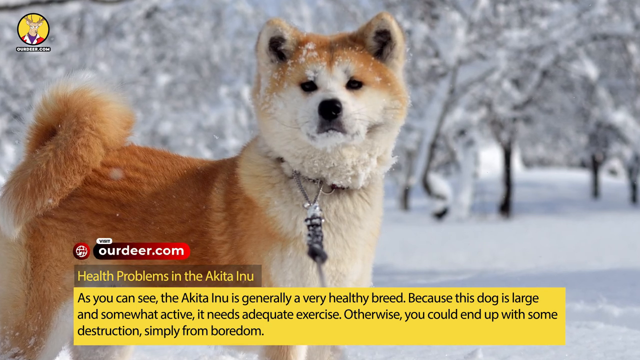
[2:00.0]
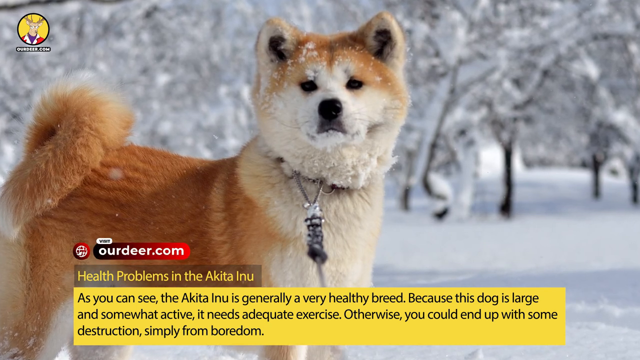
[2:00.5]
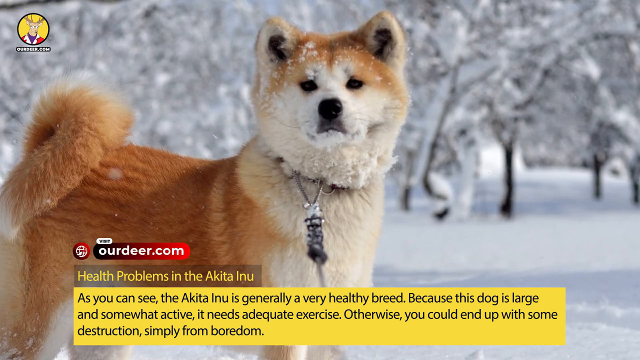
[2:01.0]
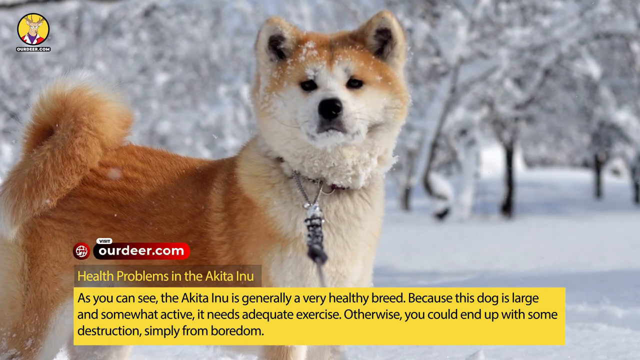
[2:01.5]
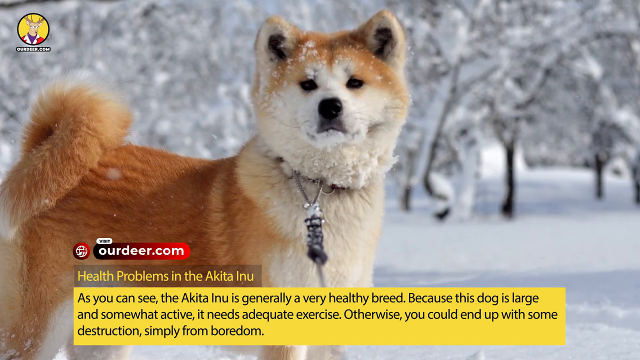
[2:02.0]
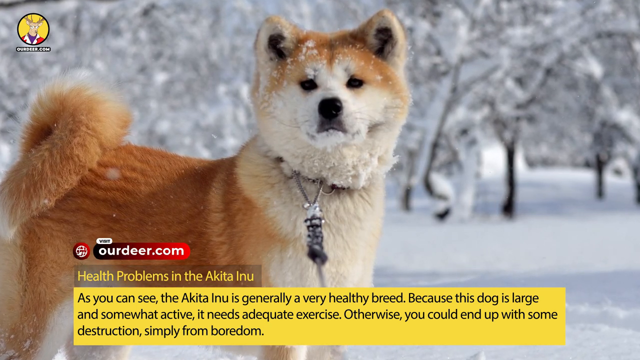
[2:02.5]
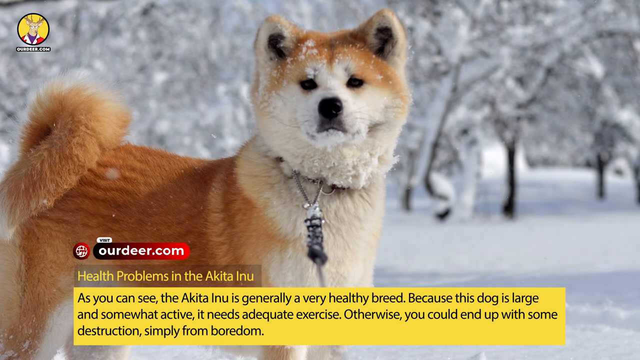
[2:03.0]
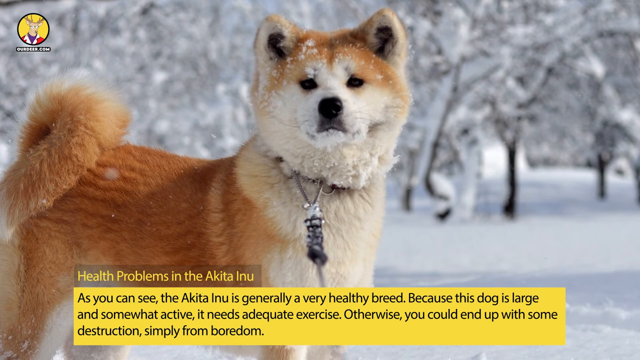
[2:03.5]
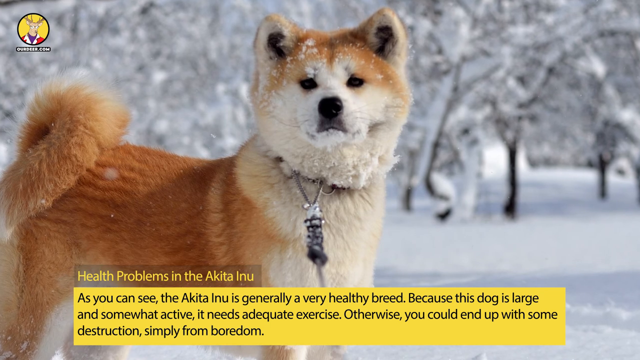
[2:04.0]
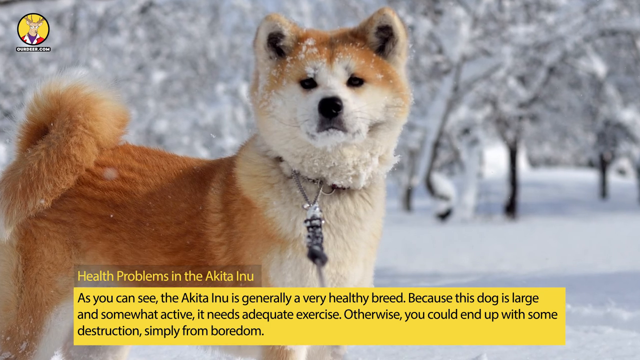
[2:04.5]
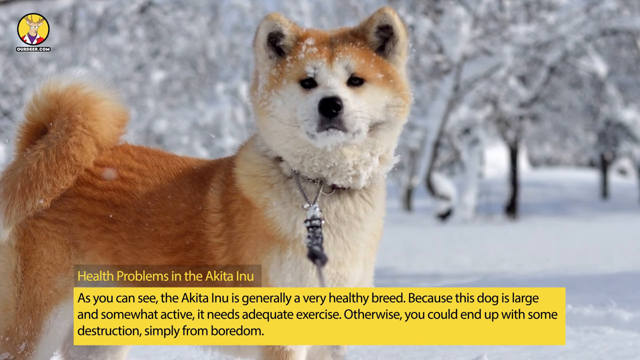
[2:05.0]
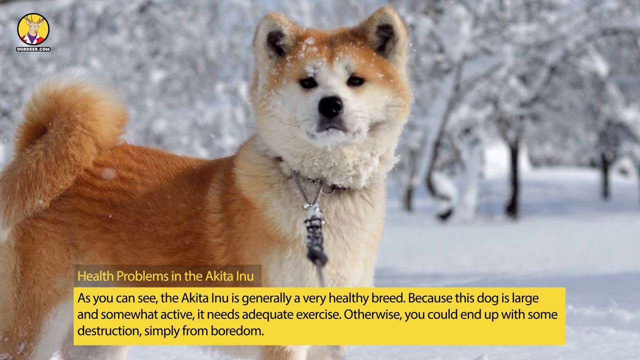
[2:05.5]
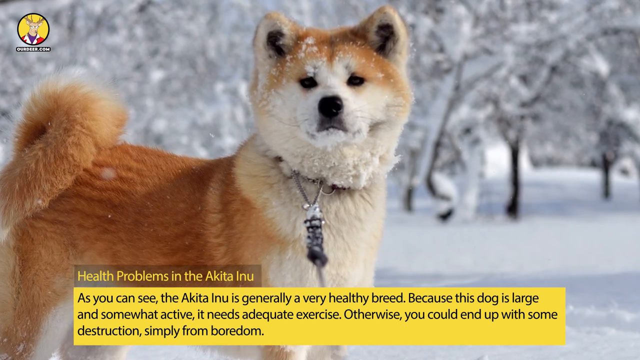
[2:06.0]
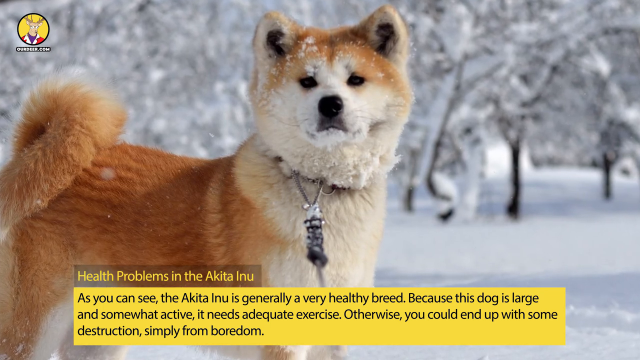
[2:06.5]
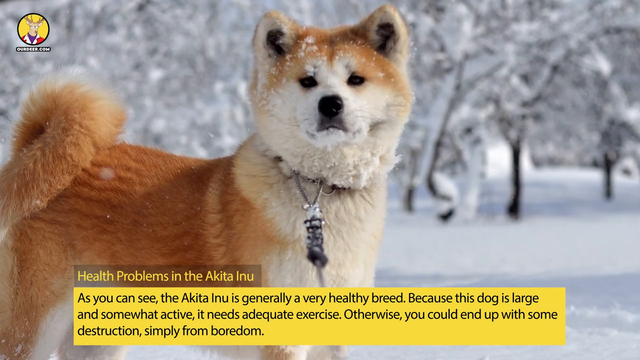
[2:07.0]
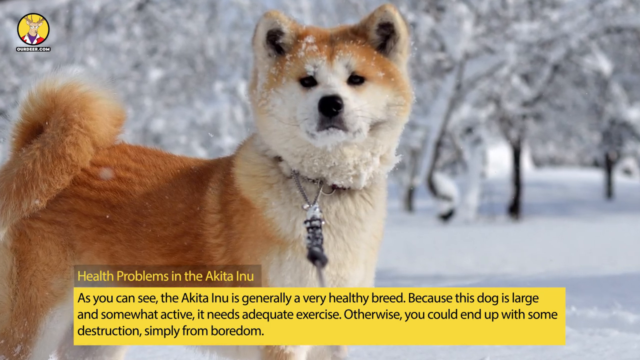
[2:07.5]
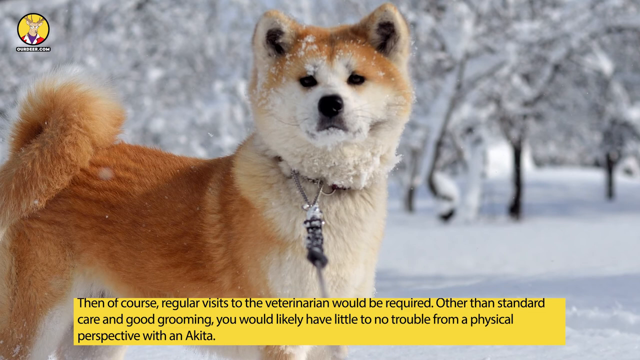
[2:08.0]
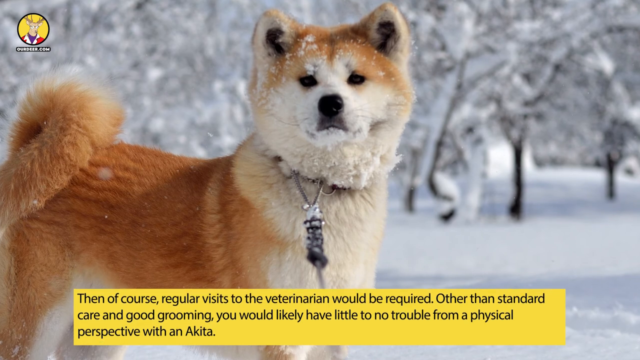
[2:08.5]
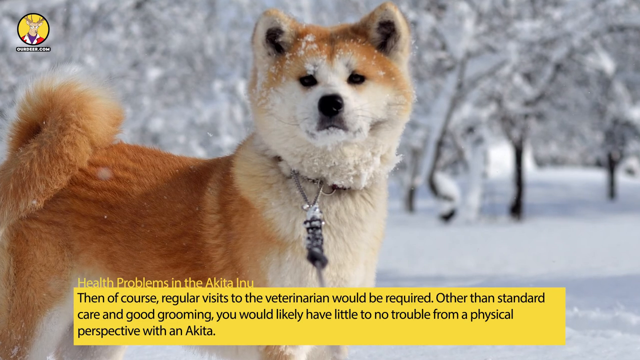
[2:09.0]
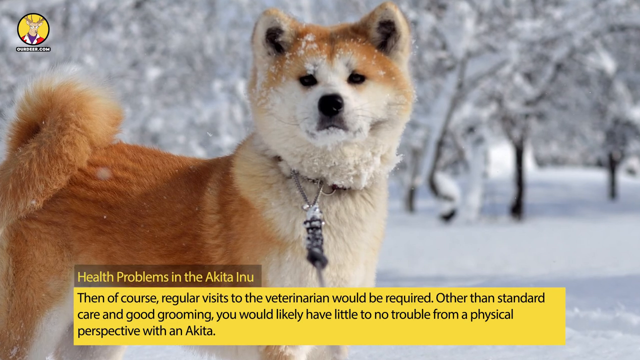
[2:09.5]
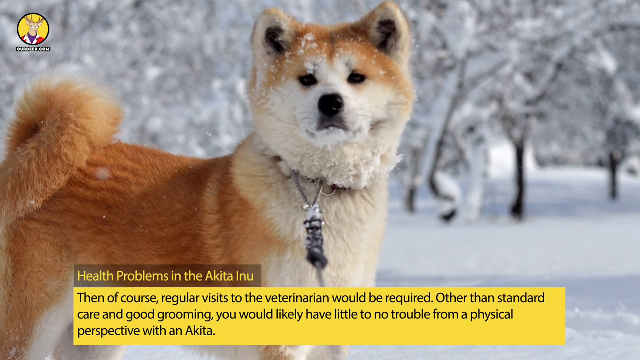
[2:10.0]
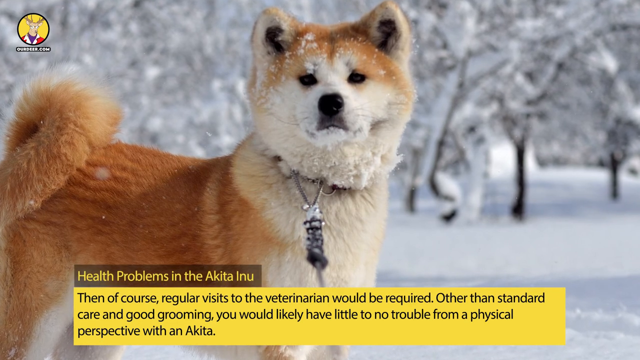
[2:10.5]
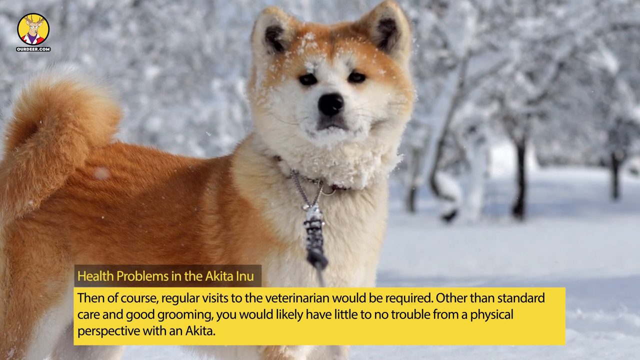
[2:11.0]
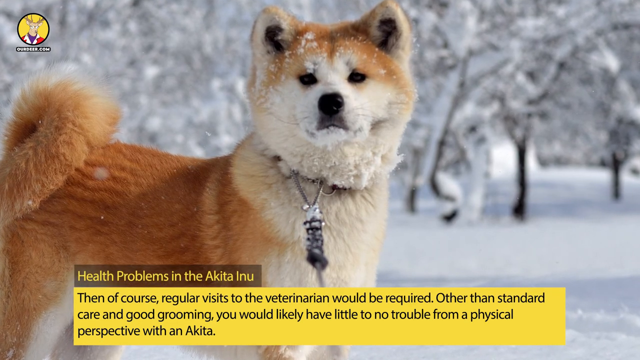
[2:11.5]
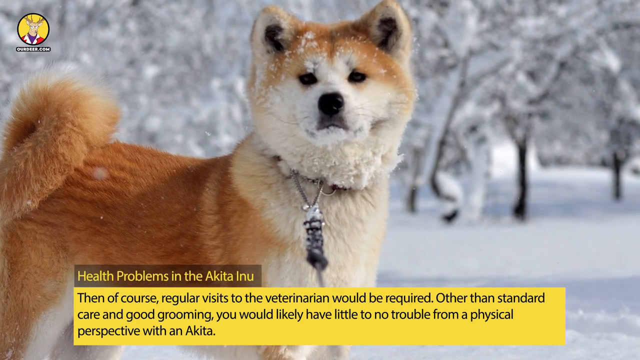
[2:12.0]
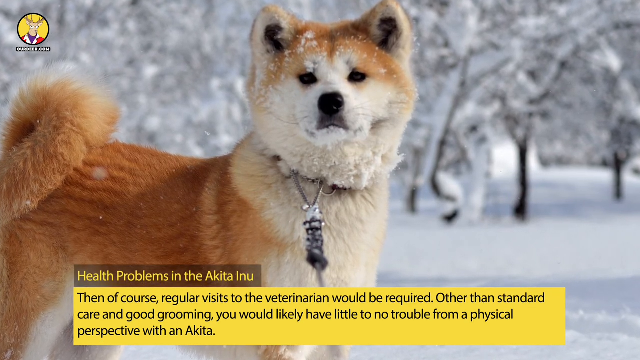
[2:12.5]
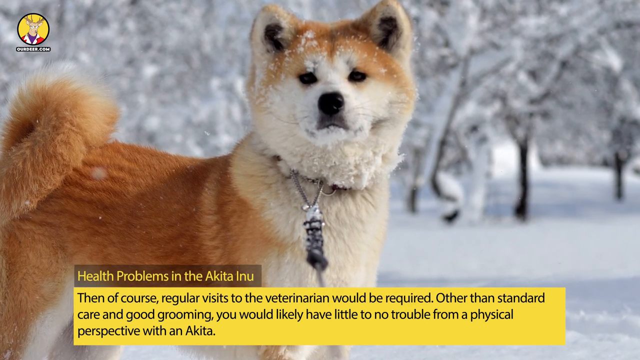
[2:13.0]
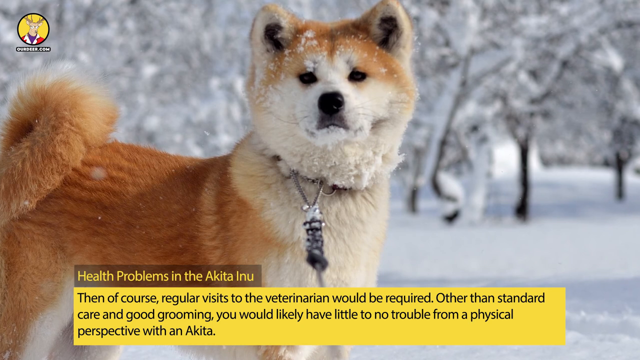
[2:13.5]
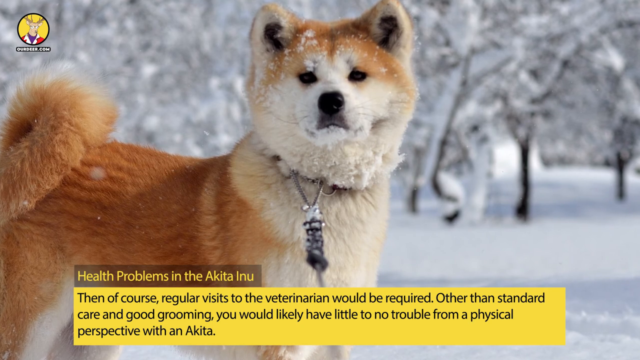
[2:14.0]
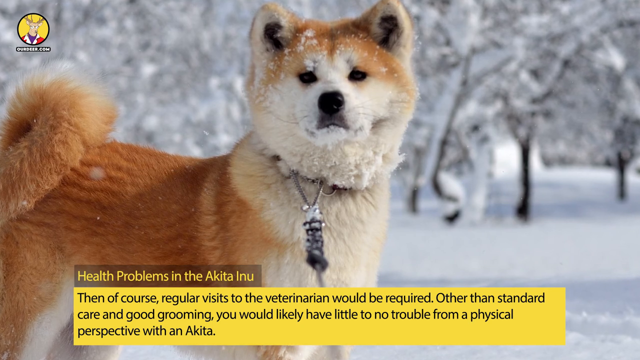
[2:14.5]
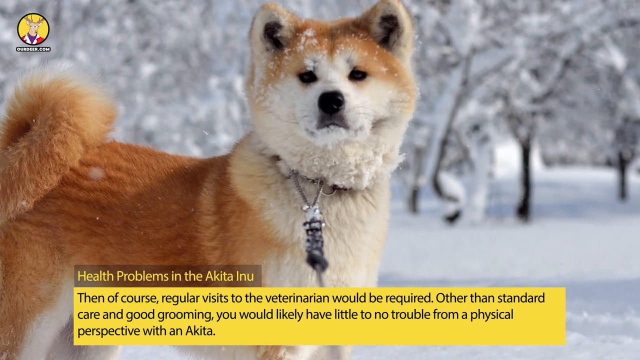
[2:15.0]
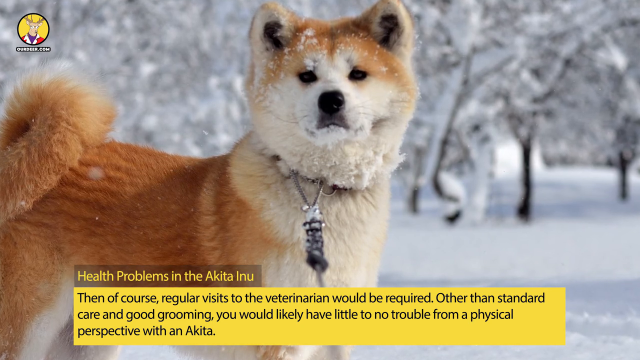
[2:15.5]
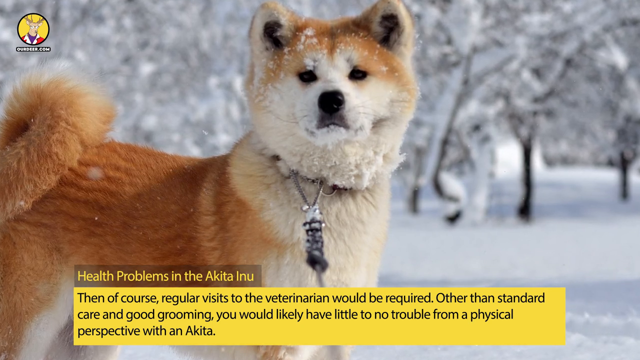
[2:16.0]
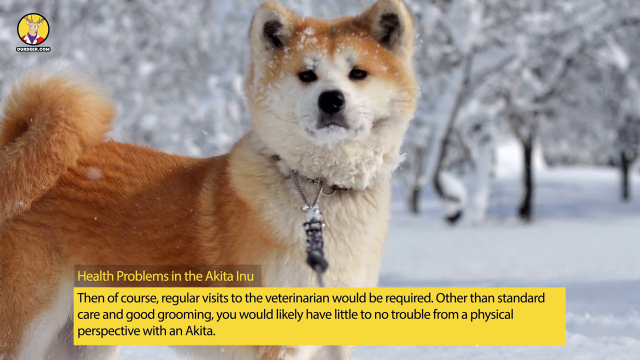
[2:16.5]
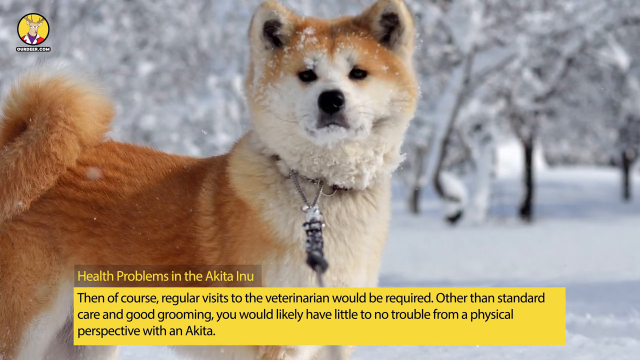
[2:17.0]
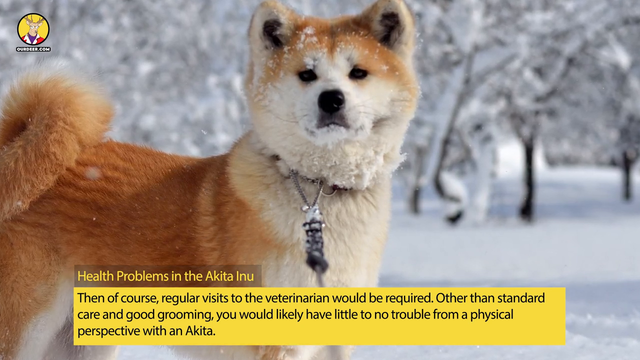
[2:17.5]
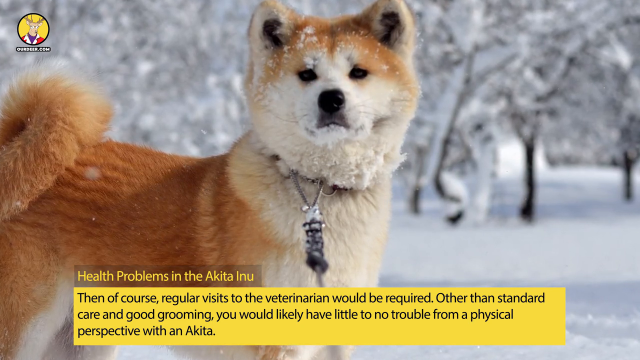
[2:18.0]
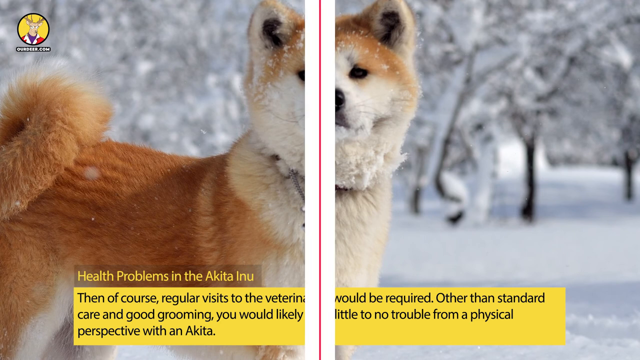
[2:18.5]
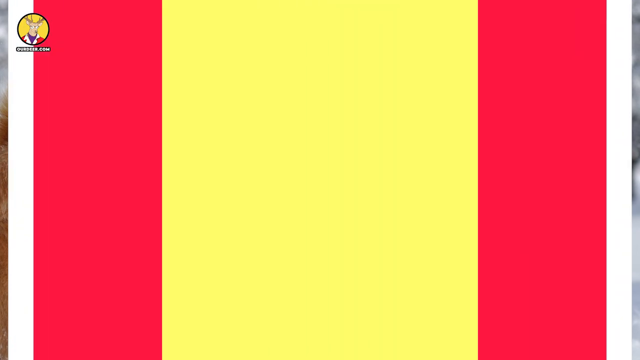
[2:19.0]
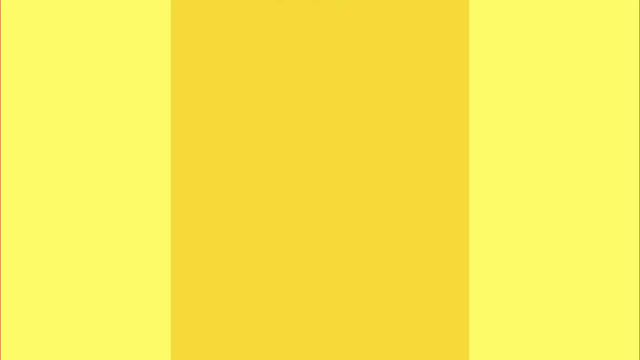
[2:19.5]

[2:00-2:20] The brown and white dog is standing in the snow. In front of the dog the text reads "viewoutdeer.com", "health problems in the Akita Inu" and "As you can see, the Akita Inu is generally a very healthy breed because this dog is large and somewhat active and needs adequate exercise. Otherwise, you could end up with some destruction simply from boredom." The view zooms in a little on the dog. It then changes to another screen reading "then, of course, regular visits to the veterinarian should be required. Other than standard care and good grooming, you would likely have little to no trouble from a physical perspective within Akita." The screen changes to pink and yellow, then to all yellow.